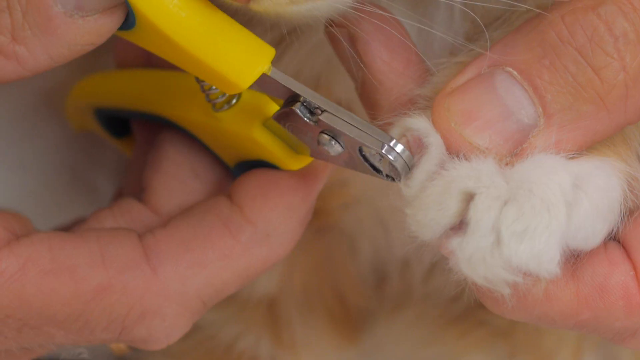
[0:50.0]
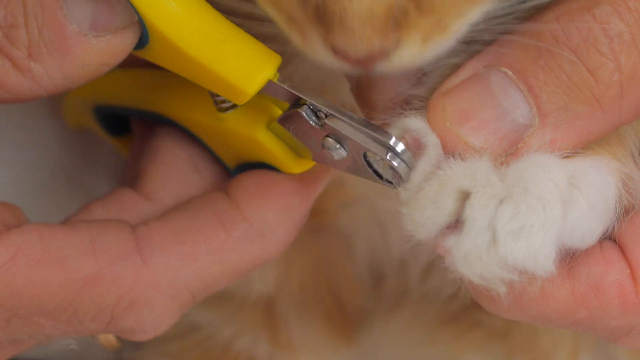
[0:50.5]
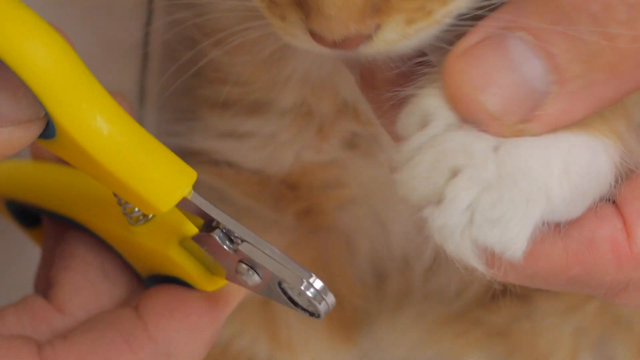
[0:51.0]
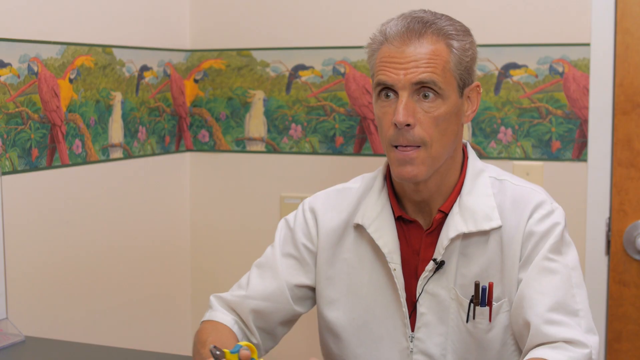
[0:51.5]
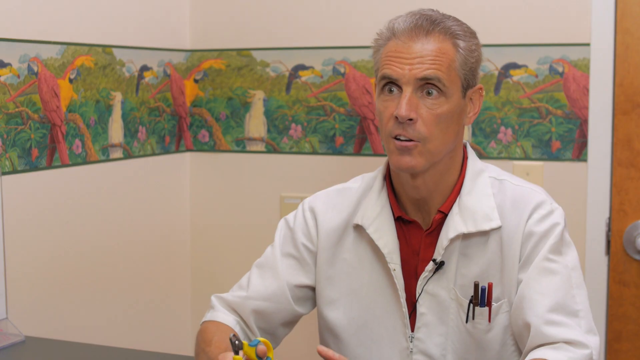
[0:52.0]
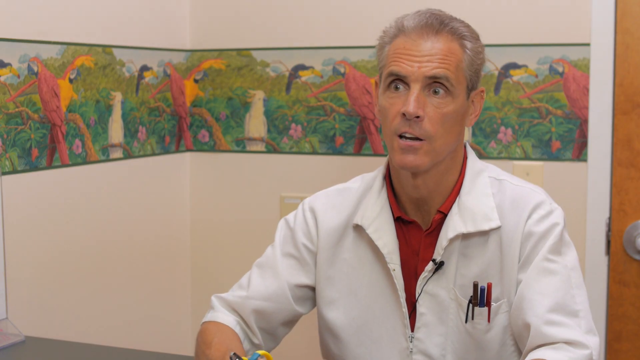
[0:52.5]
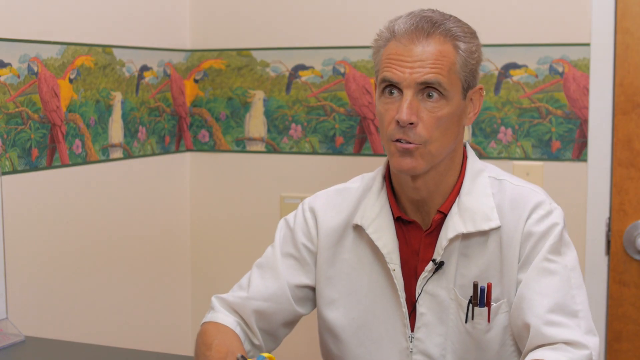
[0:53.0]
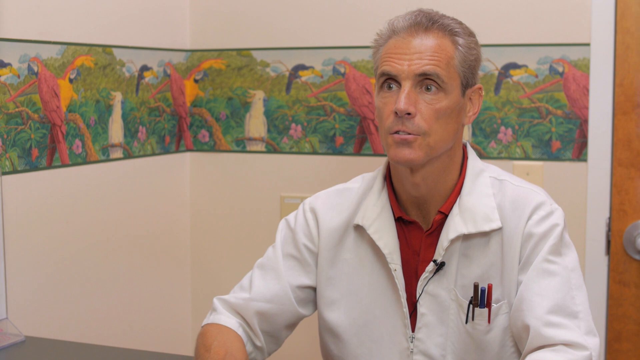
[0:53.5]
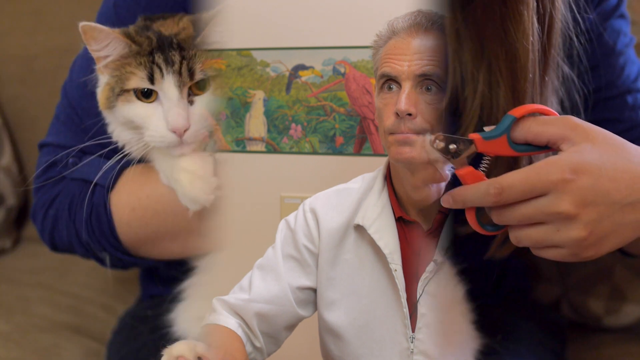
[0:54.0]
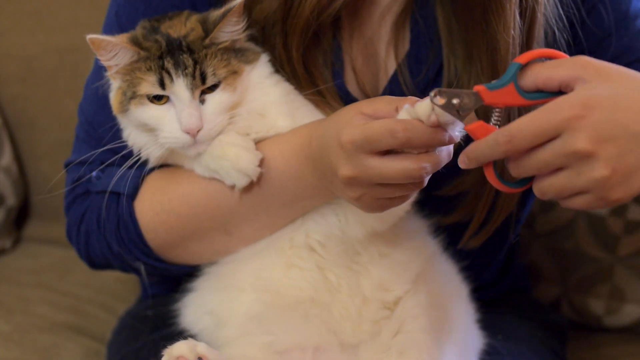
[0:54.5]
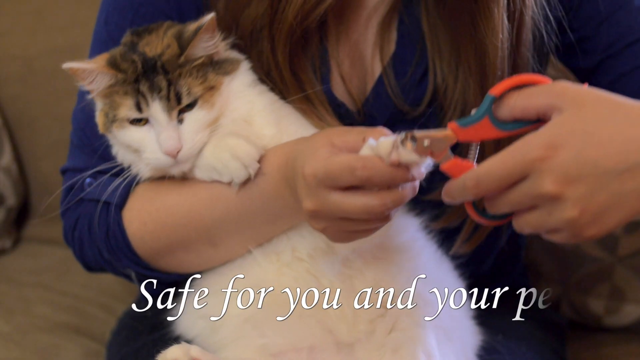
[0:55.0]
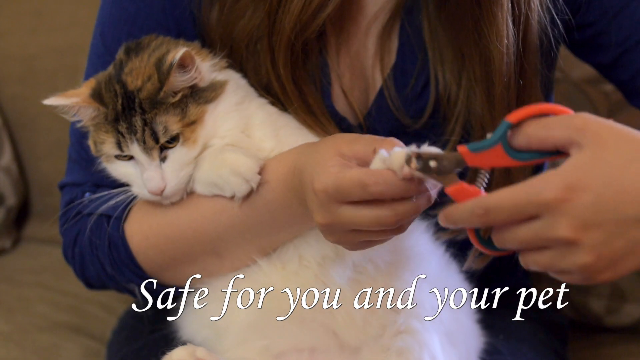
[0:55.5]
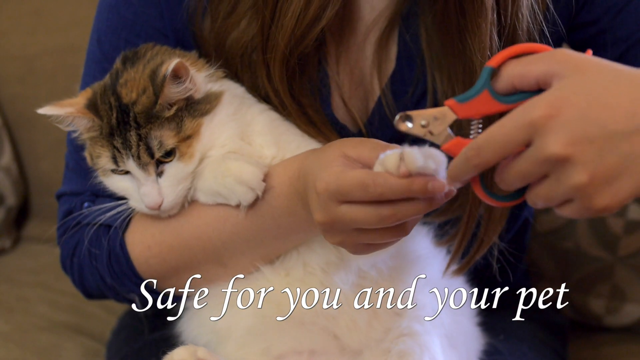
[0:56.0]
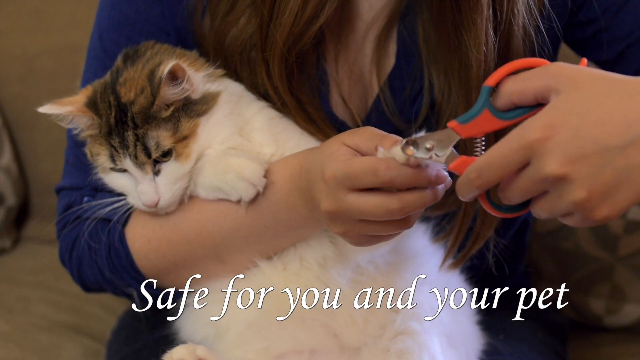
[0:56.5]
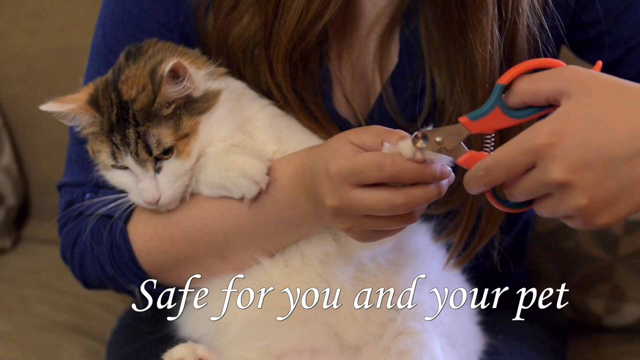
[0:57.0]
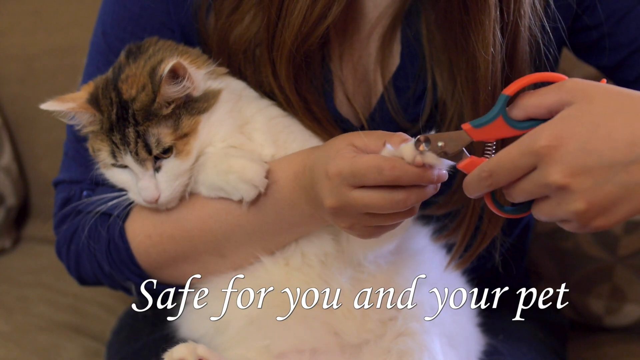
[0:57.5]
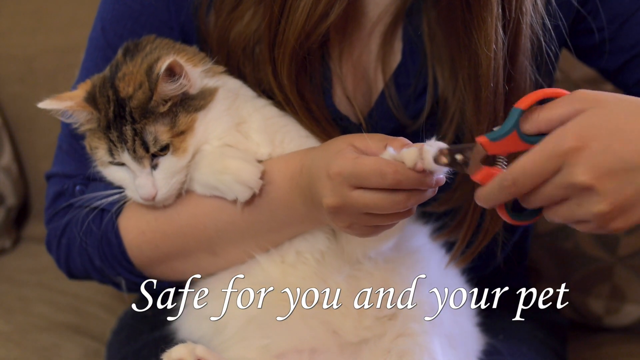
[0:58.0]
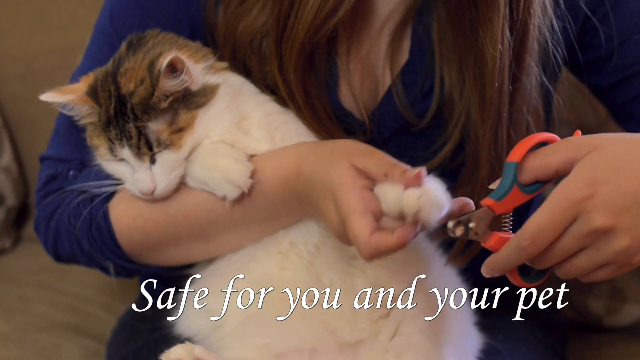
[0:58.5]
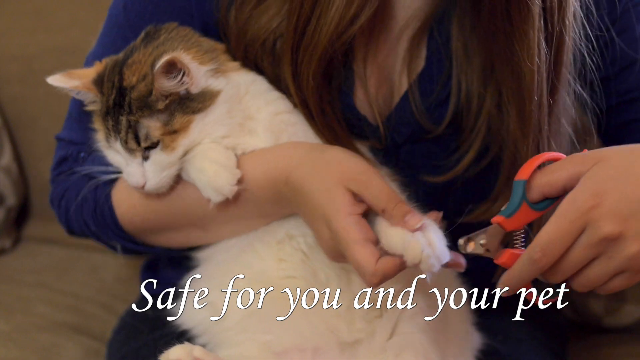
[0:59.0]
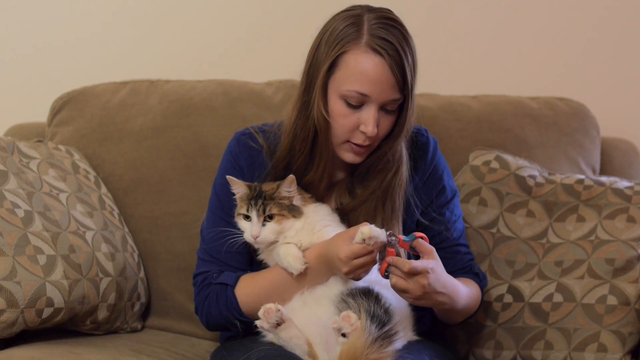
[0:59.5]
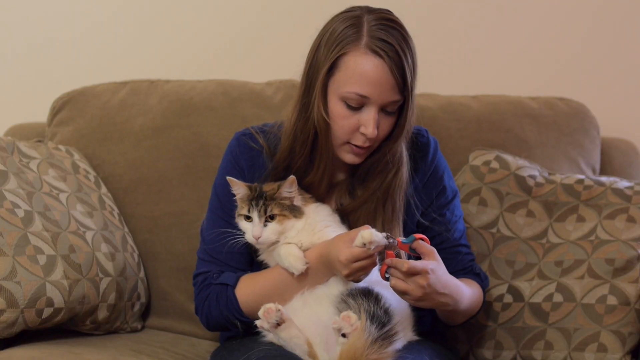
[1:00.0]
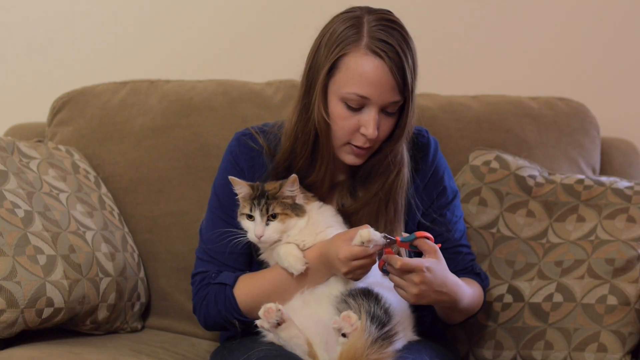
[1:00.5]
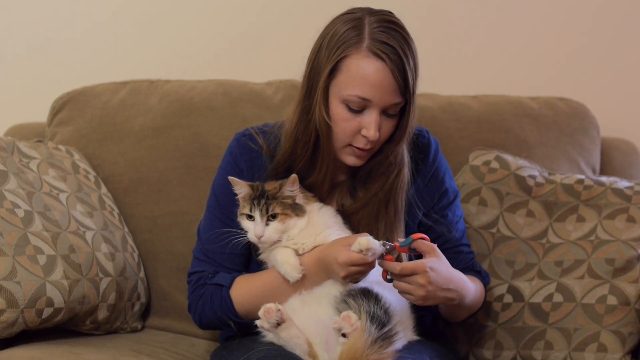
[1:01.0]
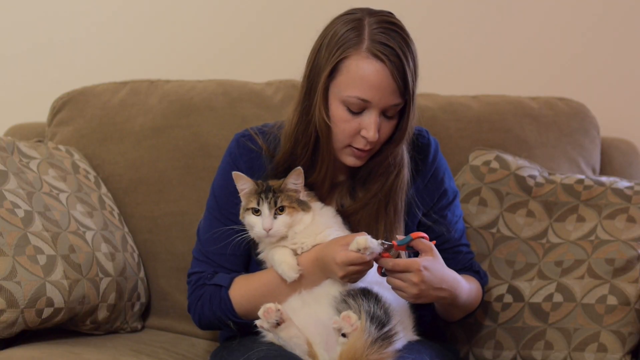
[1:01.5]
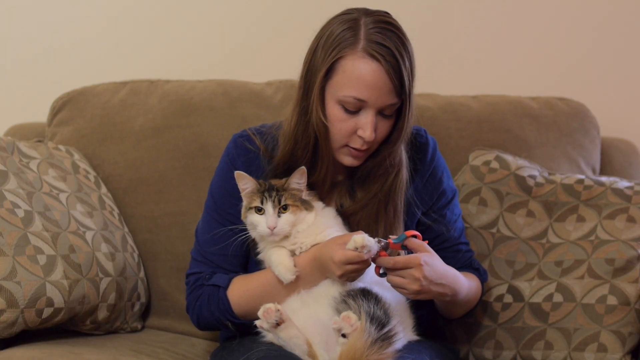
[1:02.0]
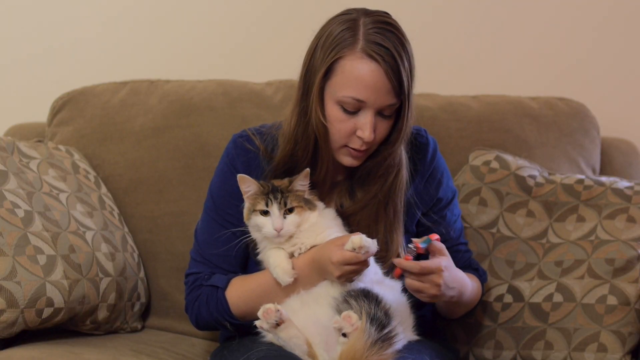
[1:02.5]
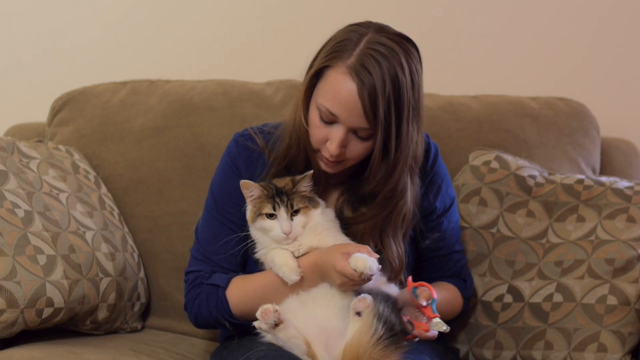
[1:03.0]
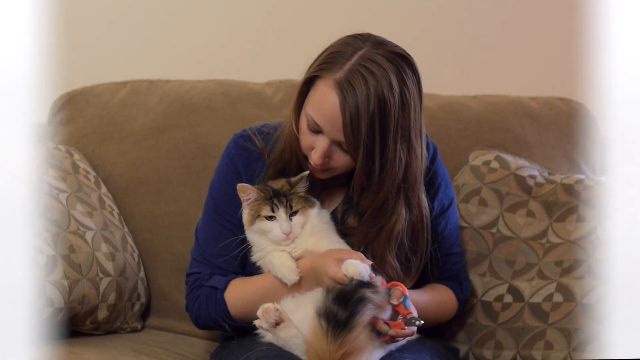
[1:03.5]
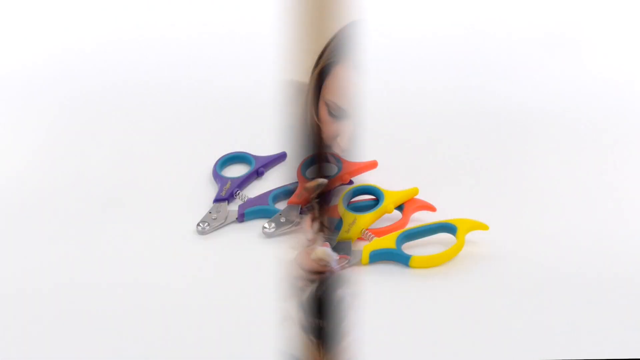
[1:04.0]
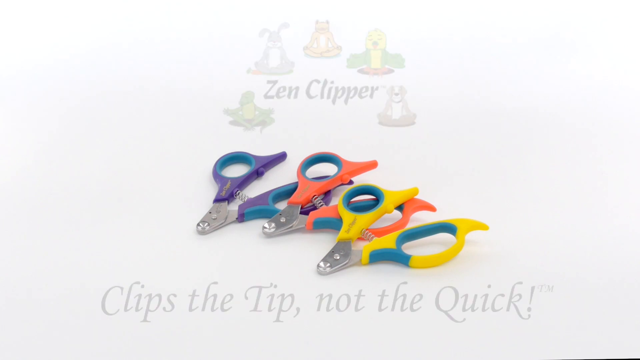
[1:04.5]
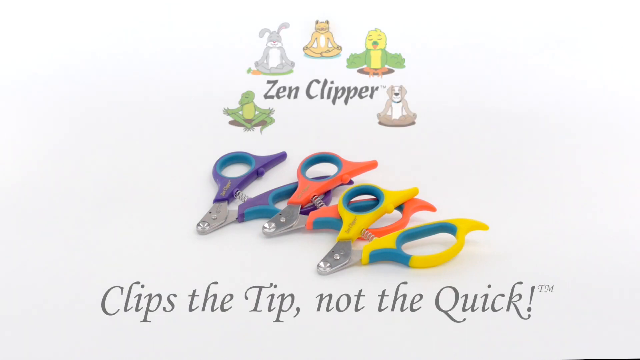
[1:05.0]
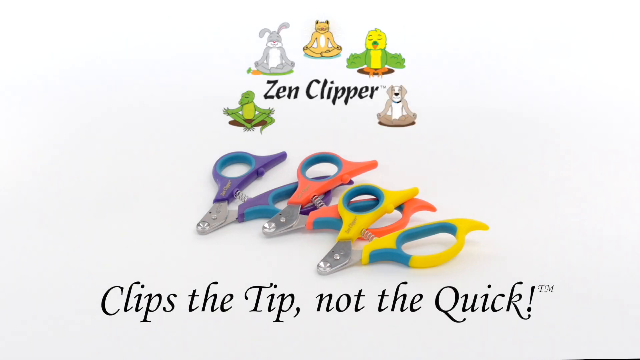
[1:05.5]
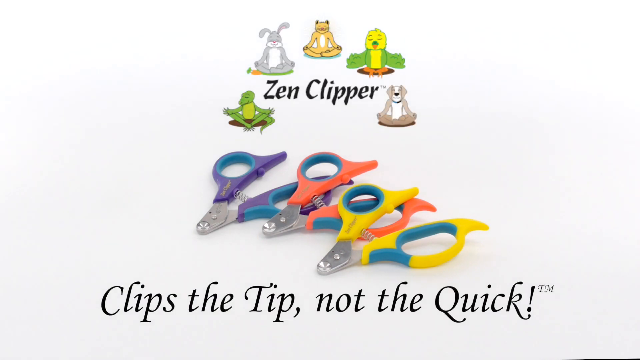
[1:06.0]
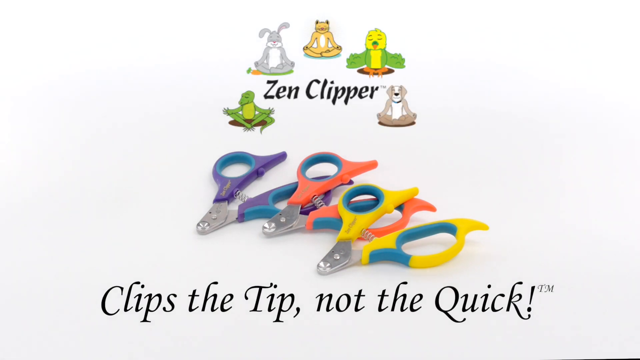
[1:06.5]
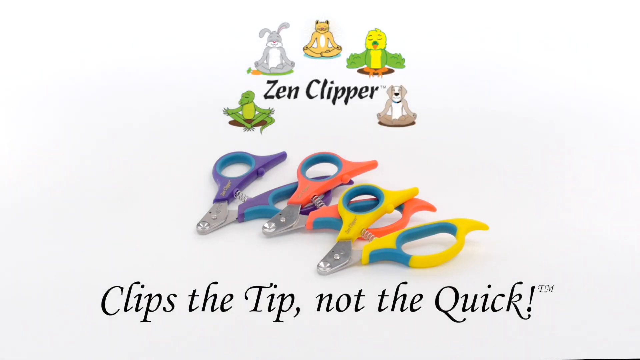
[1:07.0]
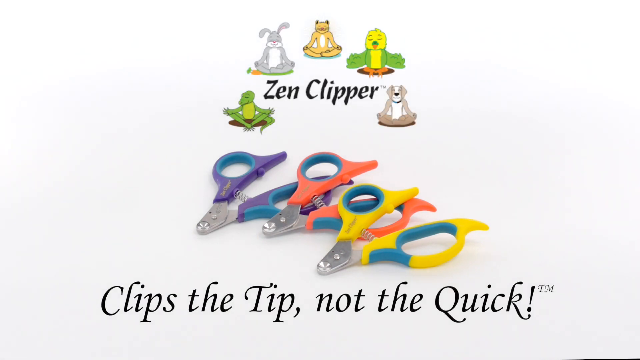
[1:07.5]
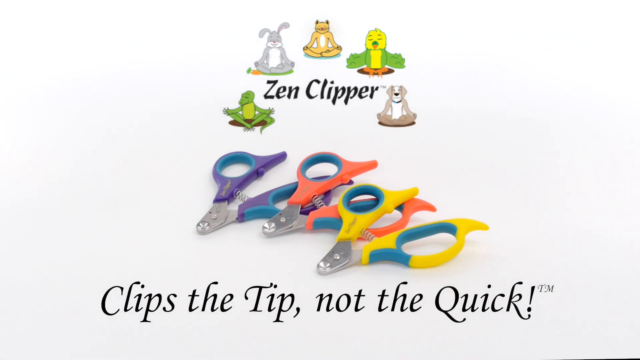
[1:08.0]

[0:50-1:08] A man's hand holding a yellow clipper cuts the nails of a cat, carefully trimming the really long nails. A scene shows the man, assumed to be a veterinary doctor, in a white coat, seated on a chair and explaining. He wears a red shirt beneath the white coat, a black wristwatch, and has yellow, red and black pens in his breast pocket. There are paintings and artwork in the background. Text is shown stating that it can be used on reptile babies and small mammals. Another shot shows the man cutting a cat's nails, with a white towel used to hold the cat while someone holds it during the cutting.